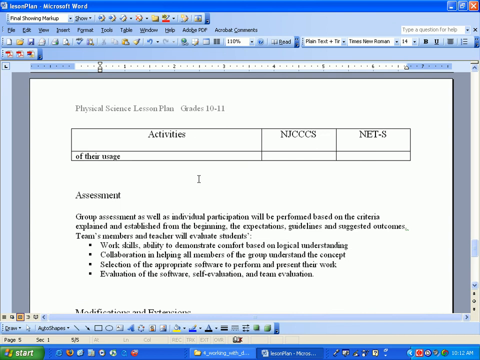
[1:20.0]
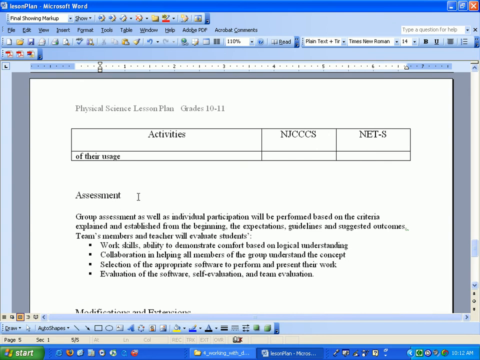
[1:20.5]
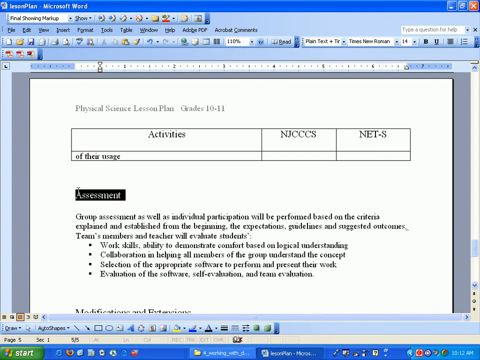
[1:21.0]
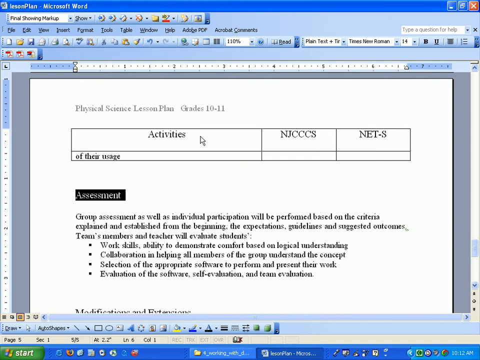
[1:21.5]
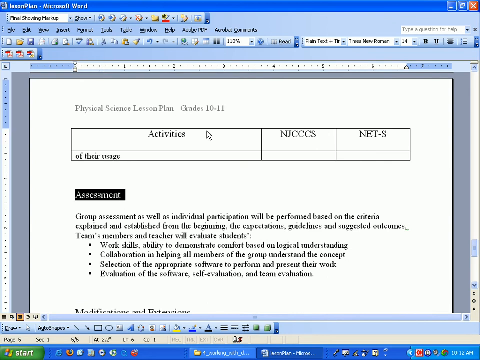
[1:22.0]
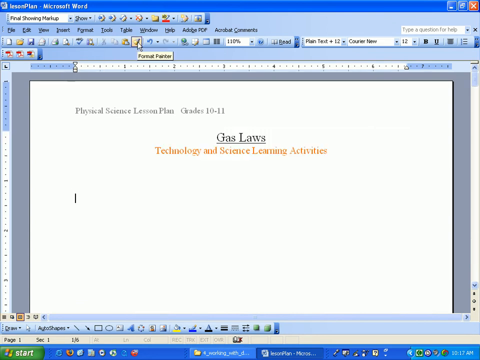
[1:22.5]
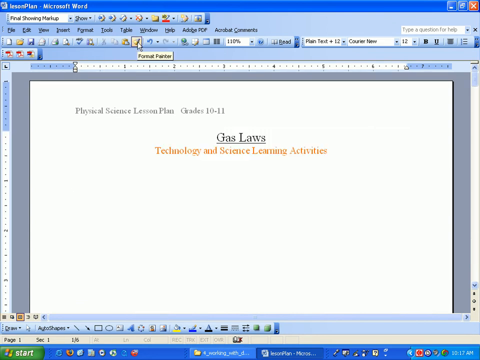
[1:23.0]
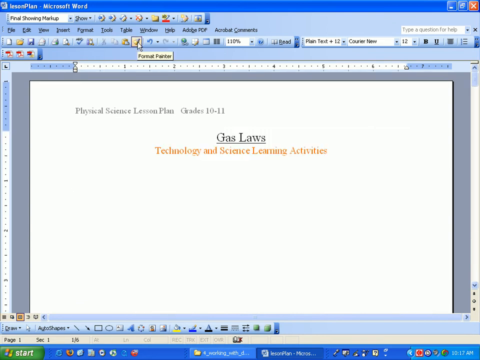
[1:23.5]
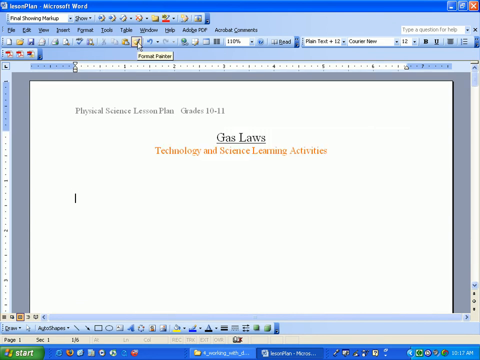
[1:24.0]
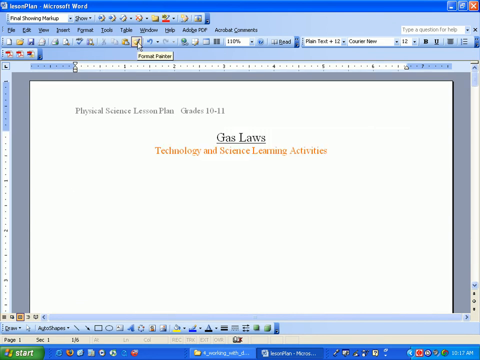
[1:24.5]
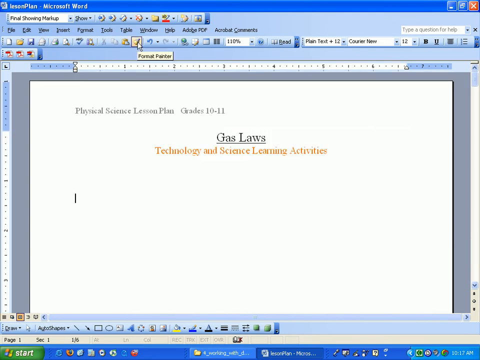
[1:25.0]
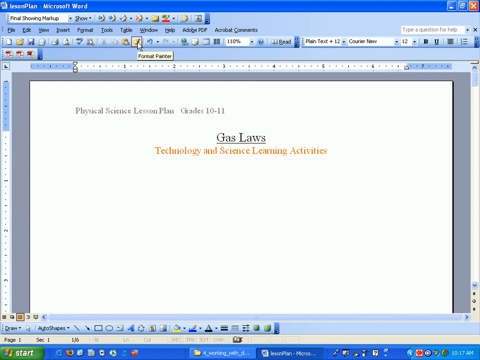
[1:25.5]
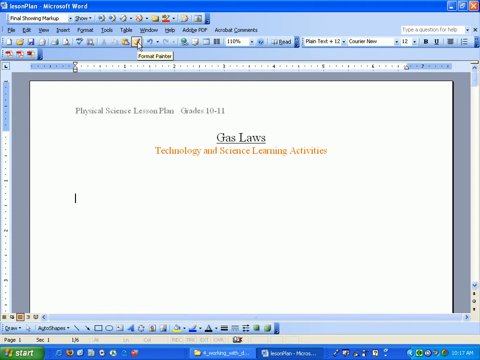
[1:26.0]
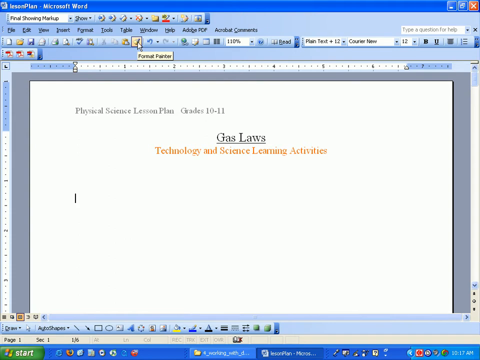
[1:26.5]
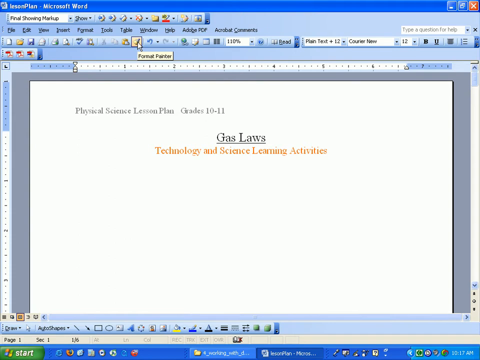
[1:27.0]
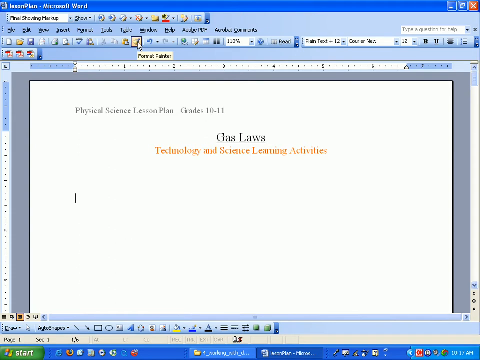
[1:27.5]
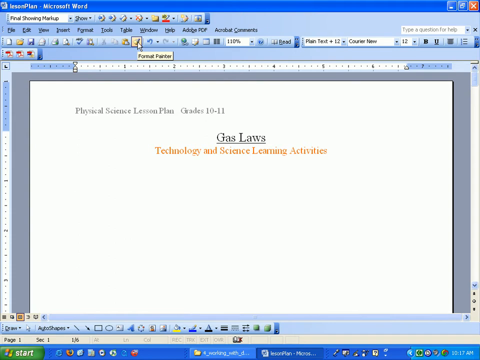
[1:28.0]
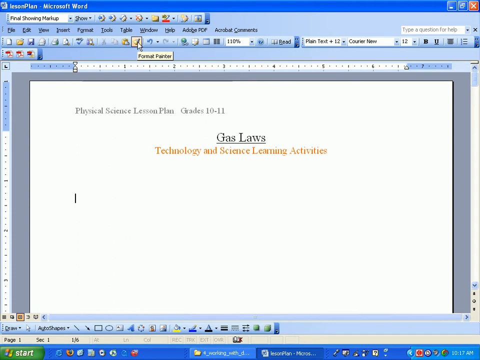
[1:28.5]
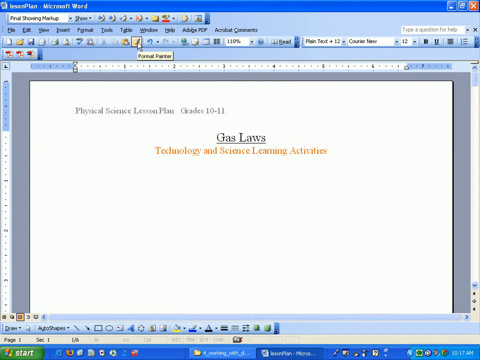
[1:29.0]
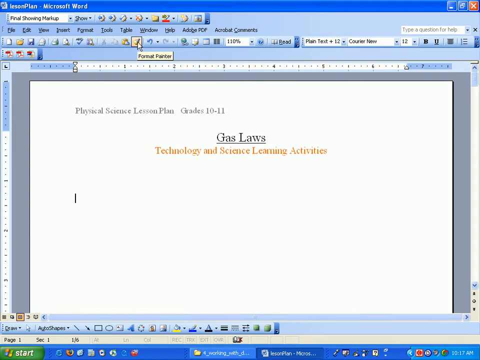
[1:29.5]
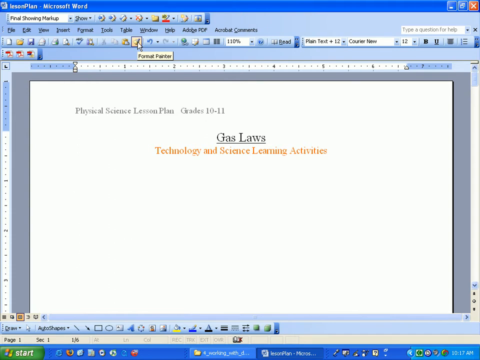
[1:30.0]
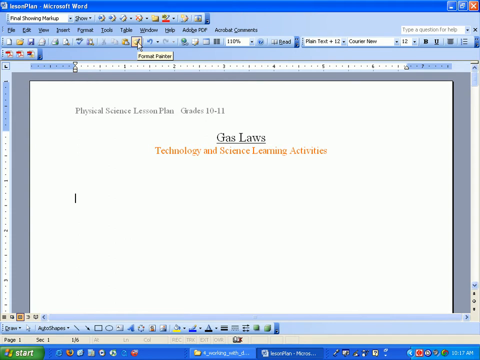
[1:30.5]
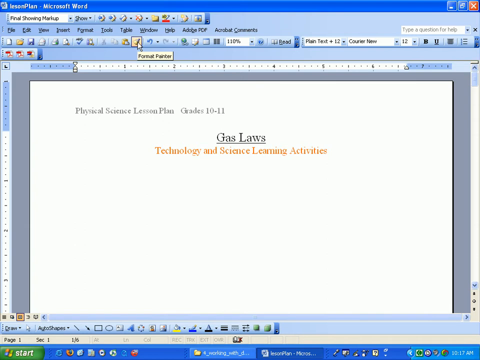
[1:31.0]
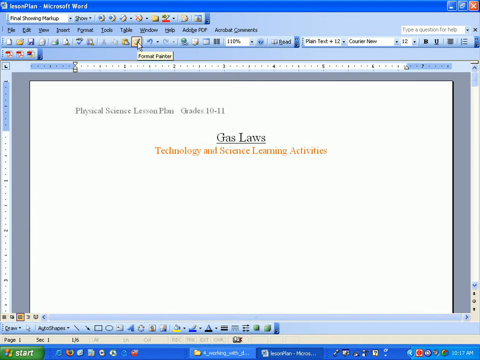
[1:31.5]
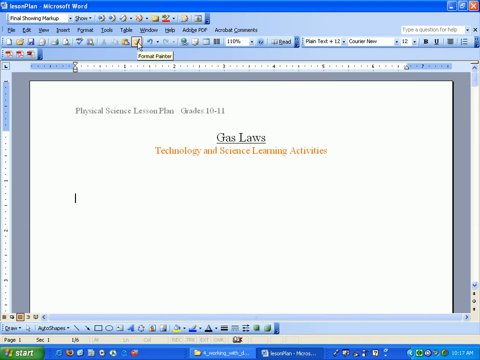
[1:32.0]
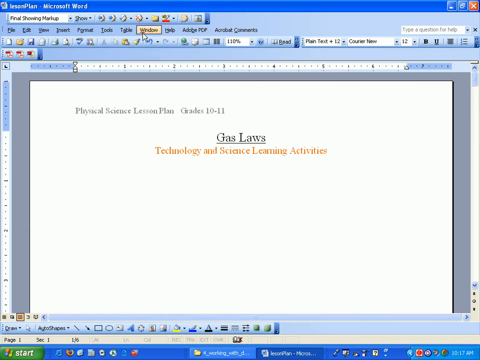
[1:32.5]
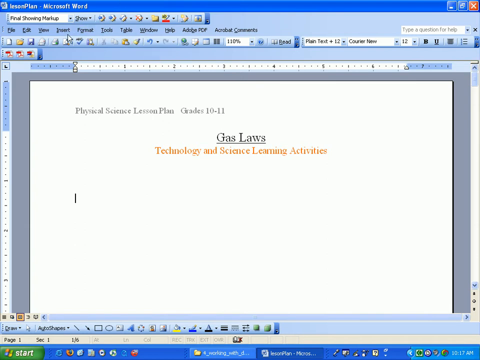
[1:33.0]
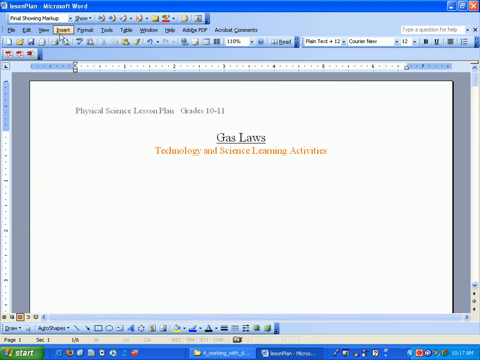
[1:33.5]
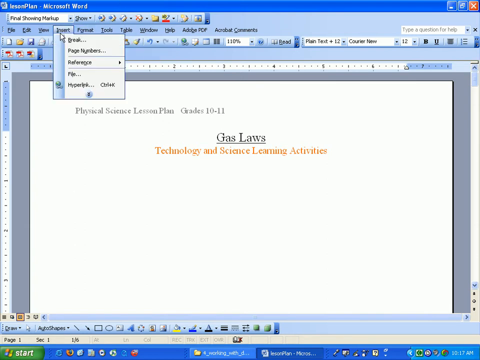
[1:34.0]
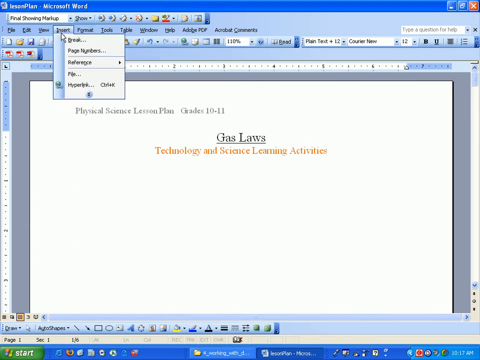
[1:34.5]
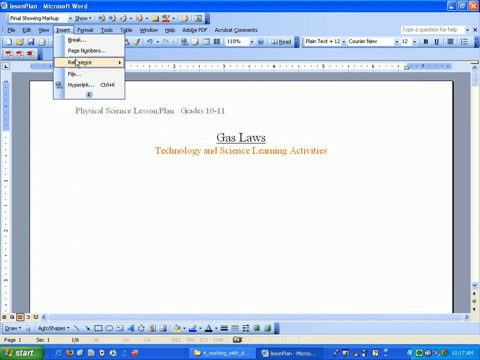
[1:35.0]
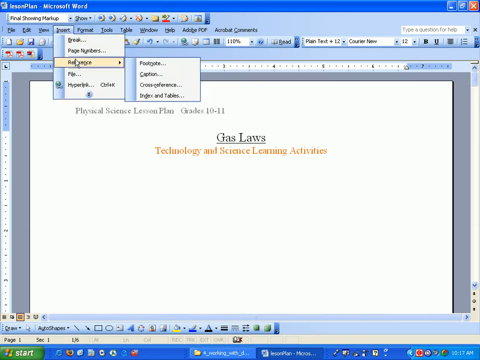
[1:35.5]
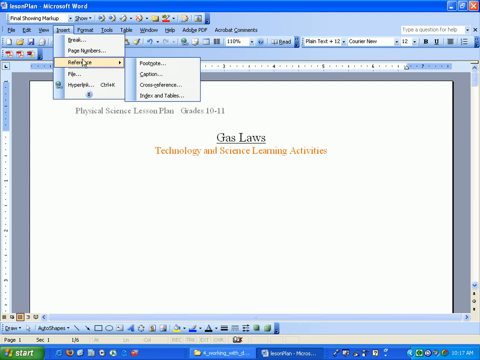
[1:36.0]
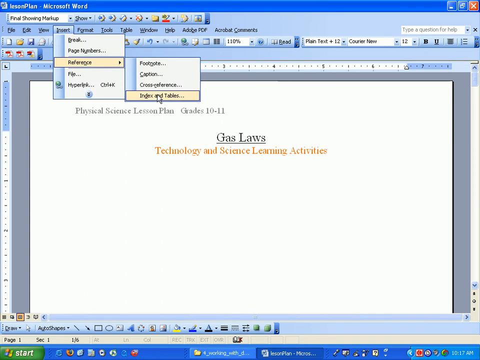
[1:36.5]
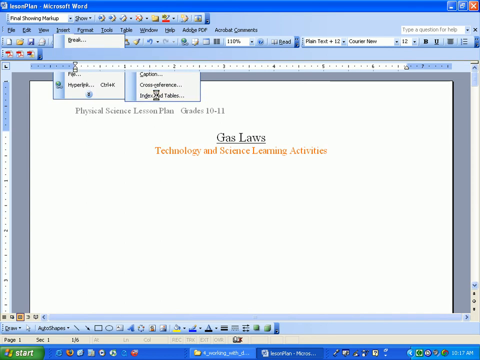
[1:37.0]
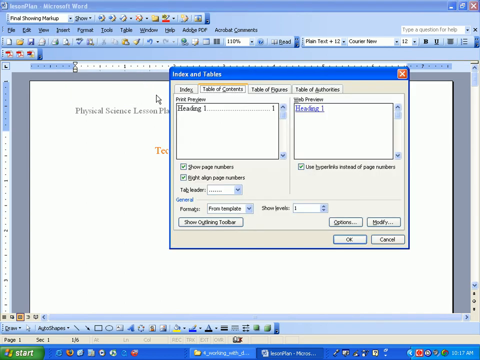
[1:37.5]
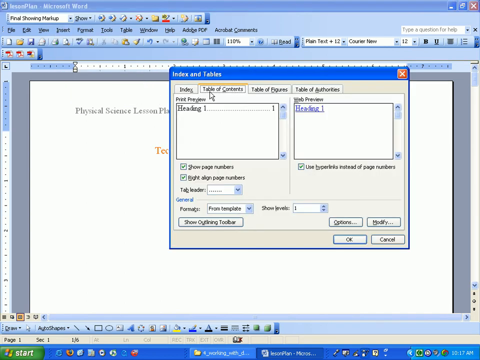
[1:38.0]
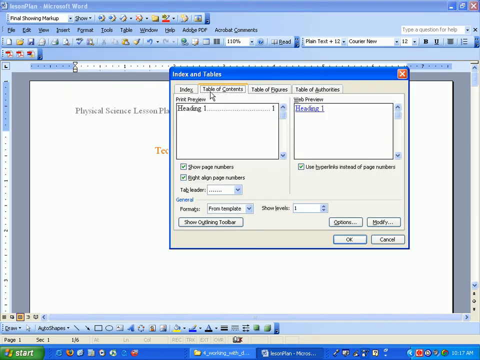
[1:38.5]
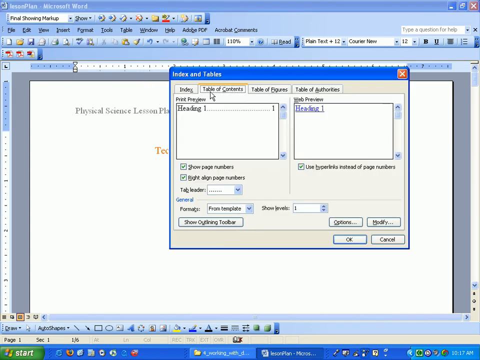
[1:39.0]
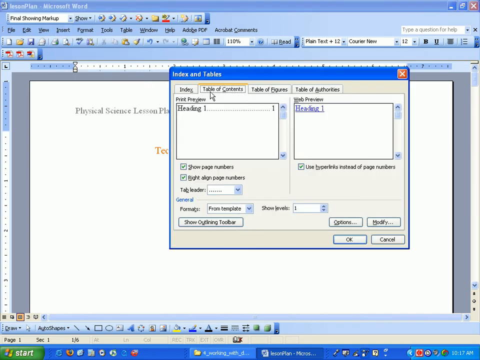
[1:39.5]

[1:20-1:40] The person is busy fixing mistakes in their writing and working on the headlines that mark the main points of different sections.